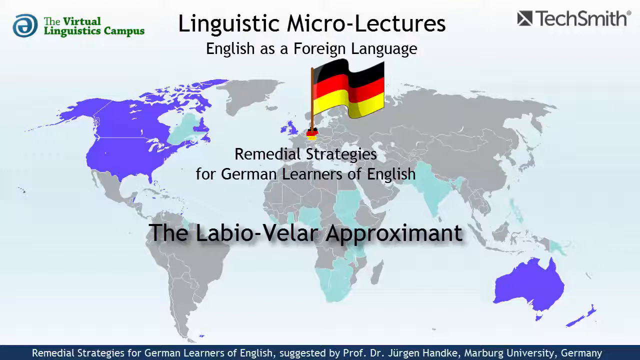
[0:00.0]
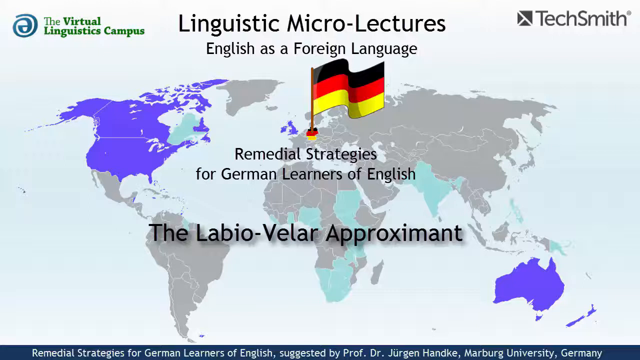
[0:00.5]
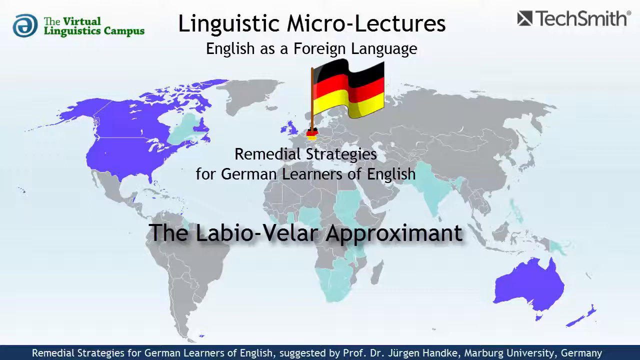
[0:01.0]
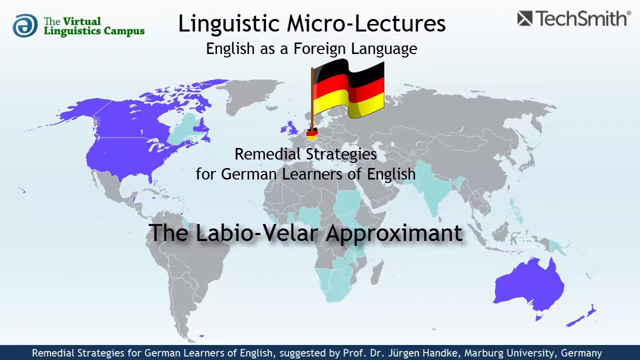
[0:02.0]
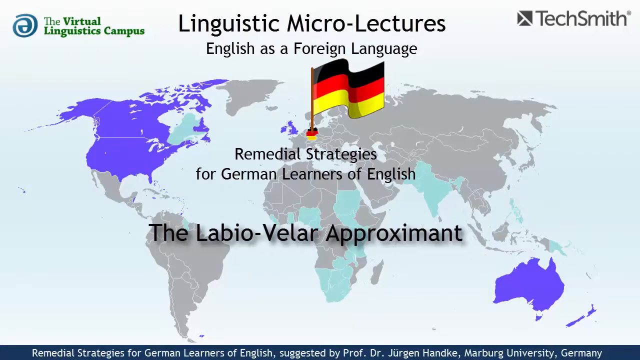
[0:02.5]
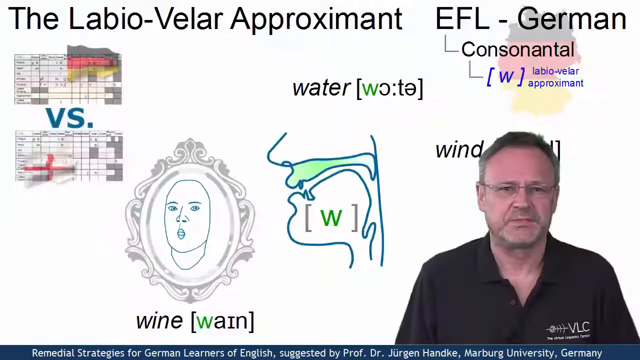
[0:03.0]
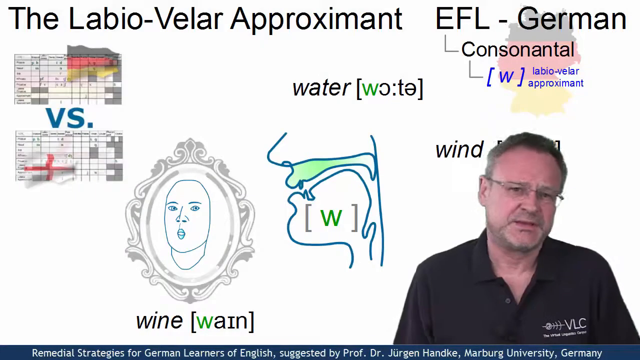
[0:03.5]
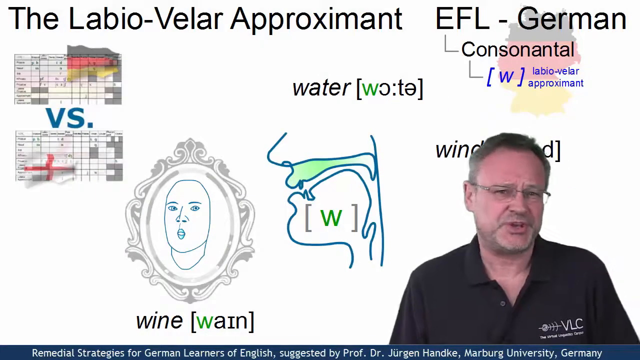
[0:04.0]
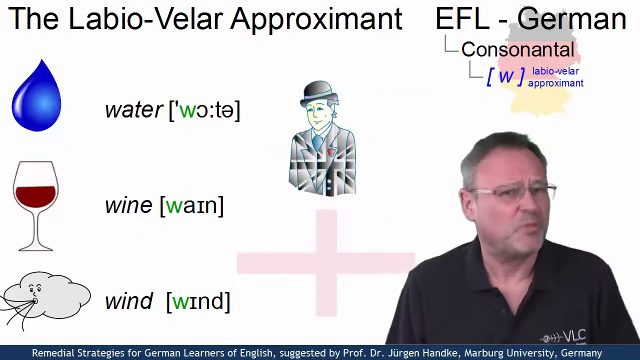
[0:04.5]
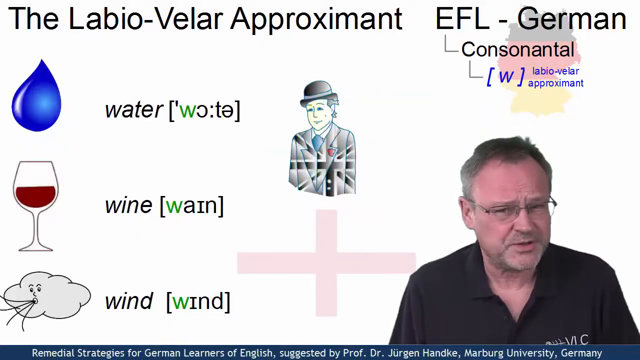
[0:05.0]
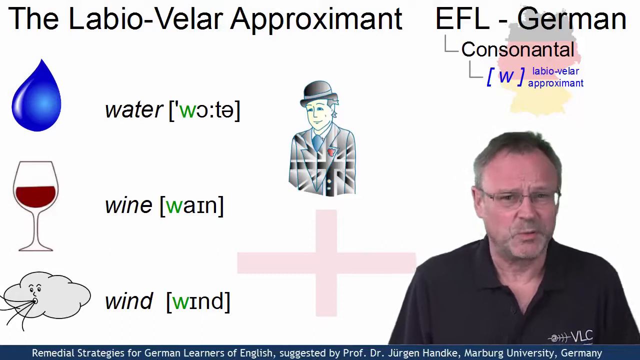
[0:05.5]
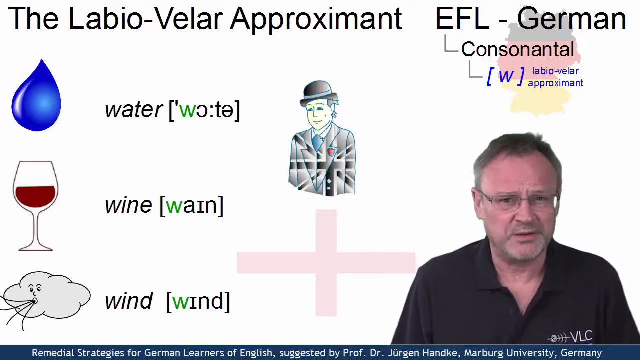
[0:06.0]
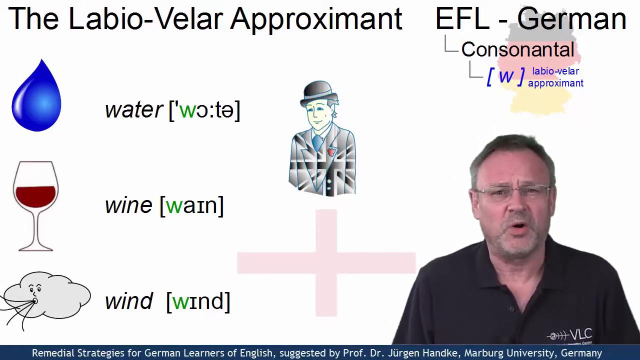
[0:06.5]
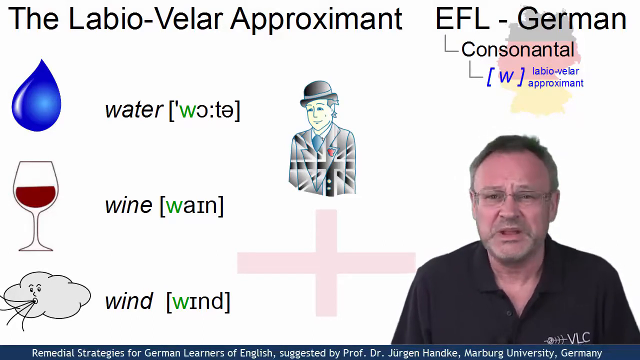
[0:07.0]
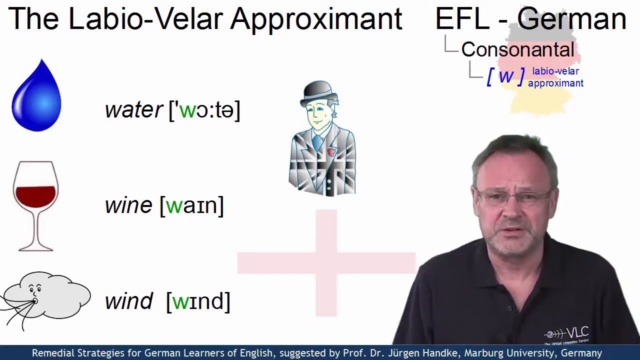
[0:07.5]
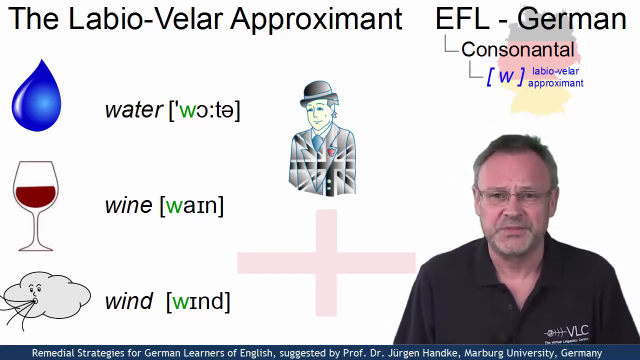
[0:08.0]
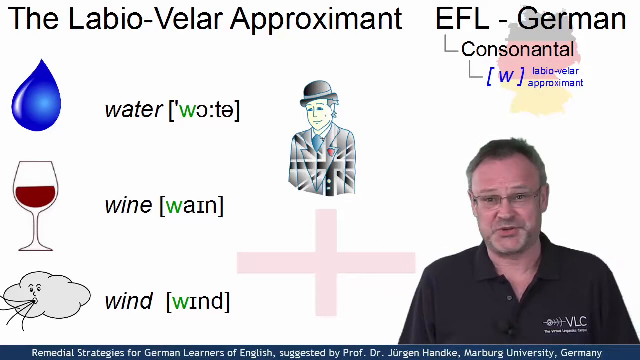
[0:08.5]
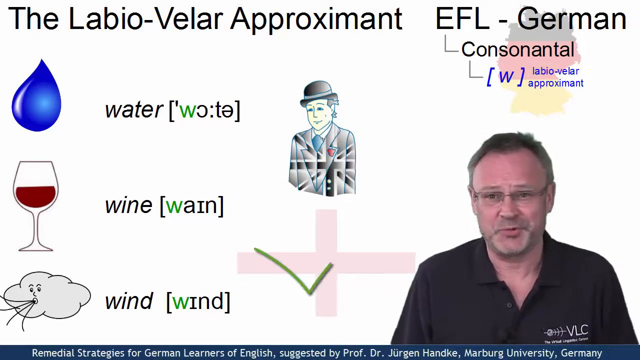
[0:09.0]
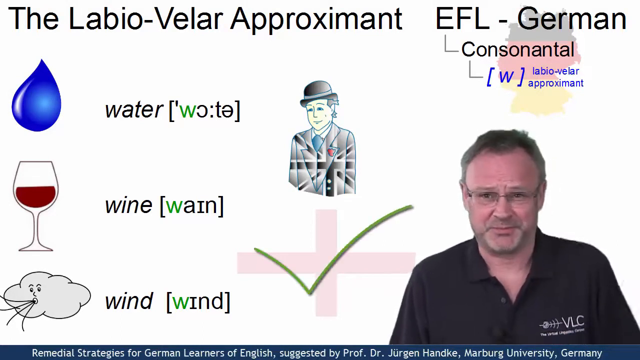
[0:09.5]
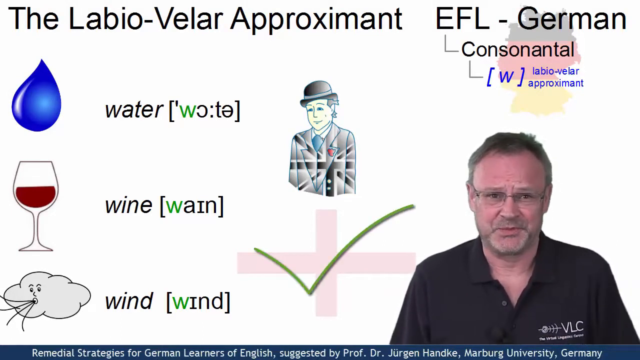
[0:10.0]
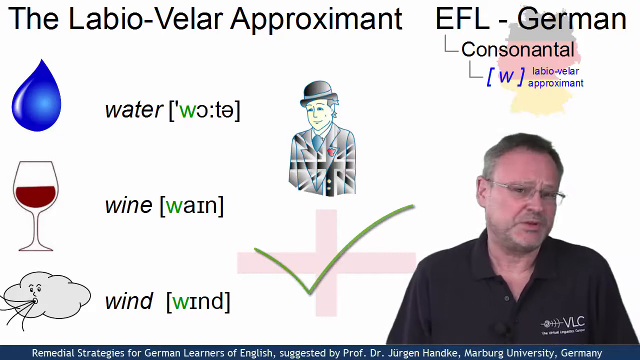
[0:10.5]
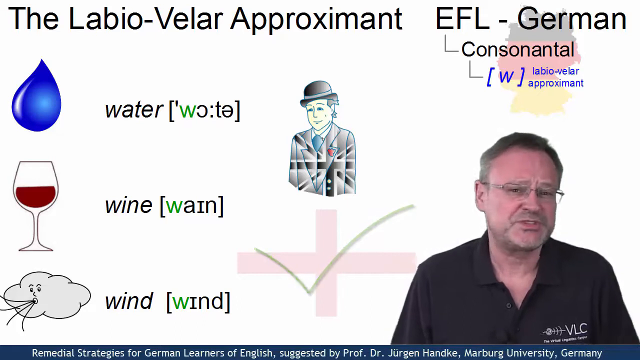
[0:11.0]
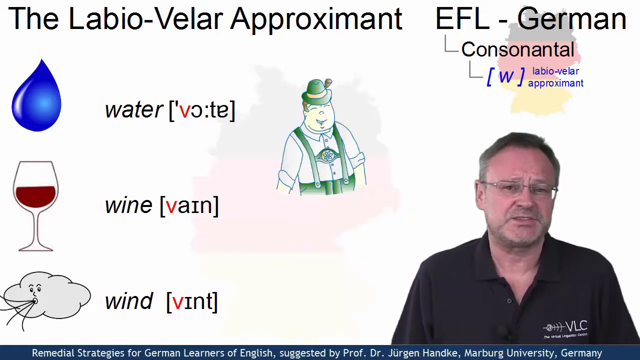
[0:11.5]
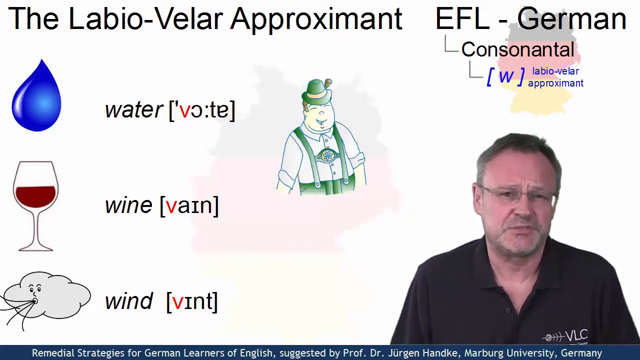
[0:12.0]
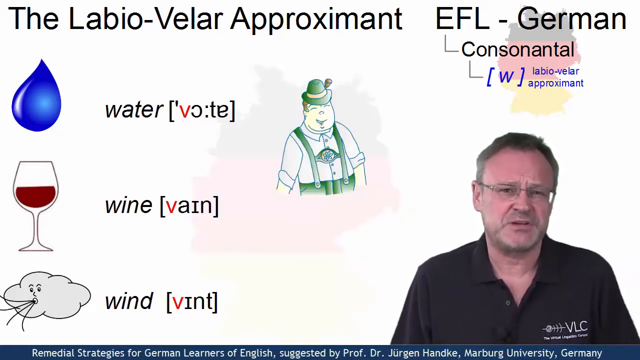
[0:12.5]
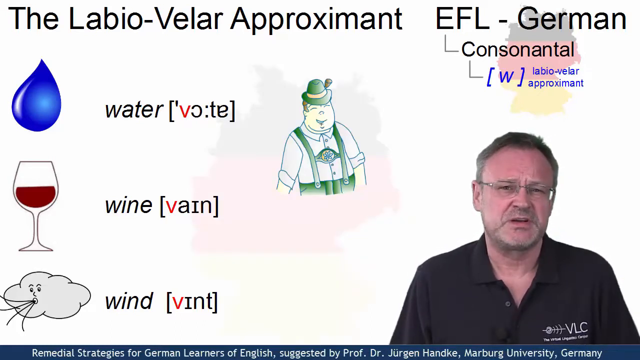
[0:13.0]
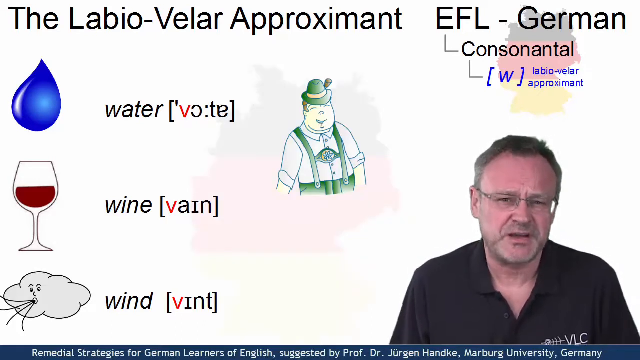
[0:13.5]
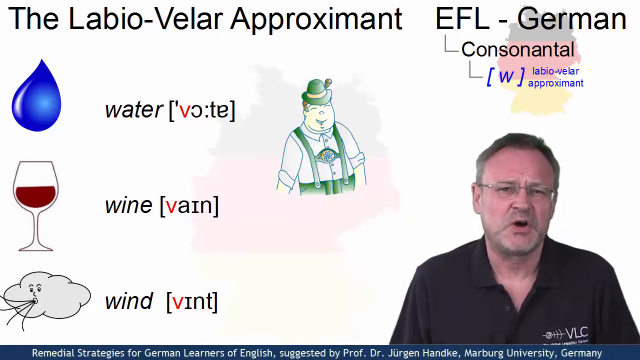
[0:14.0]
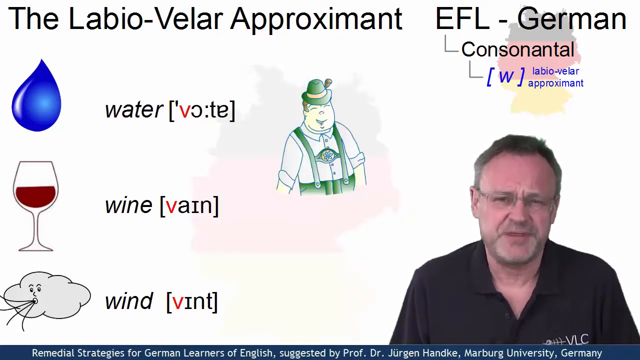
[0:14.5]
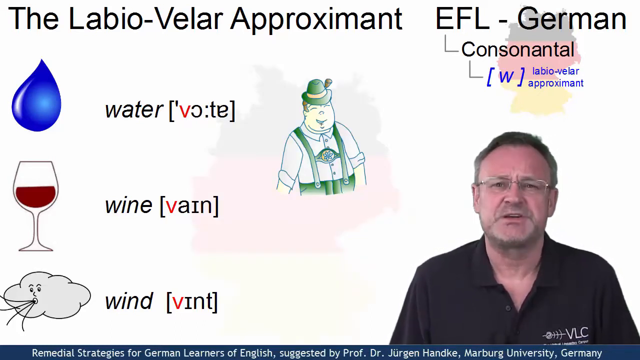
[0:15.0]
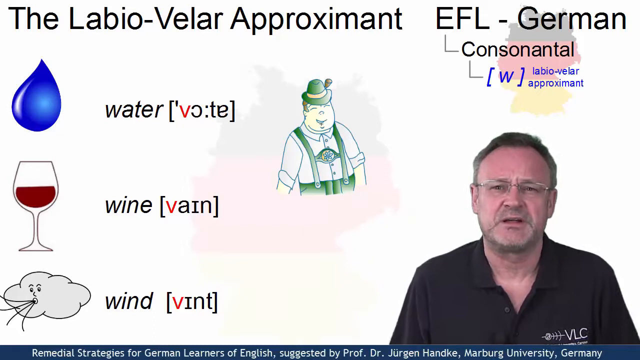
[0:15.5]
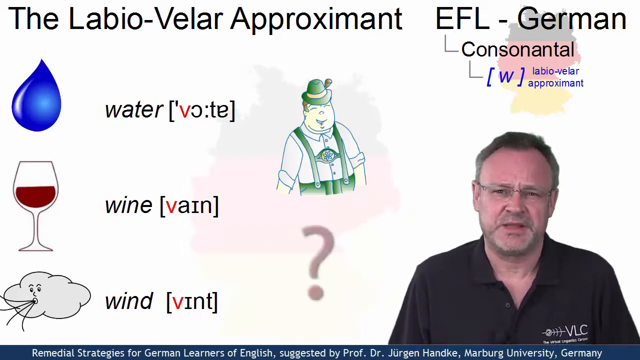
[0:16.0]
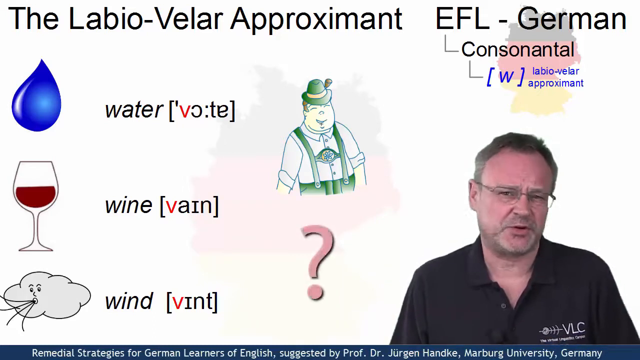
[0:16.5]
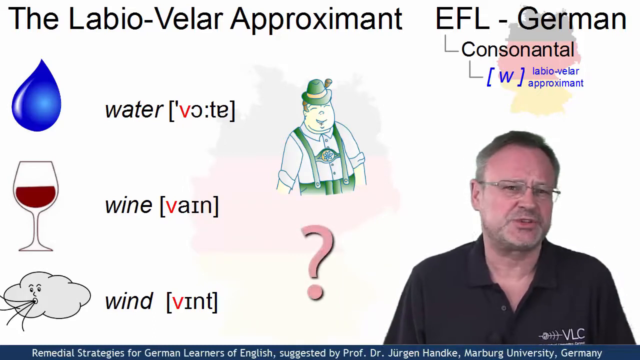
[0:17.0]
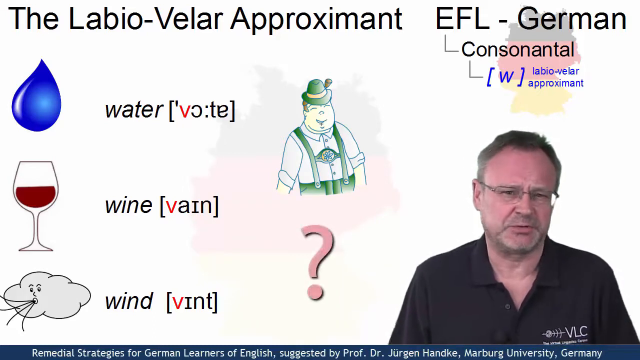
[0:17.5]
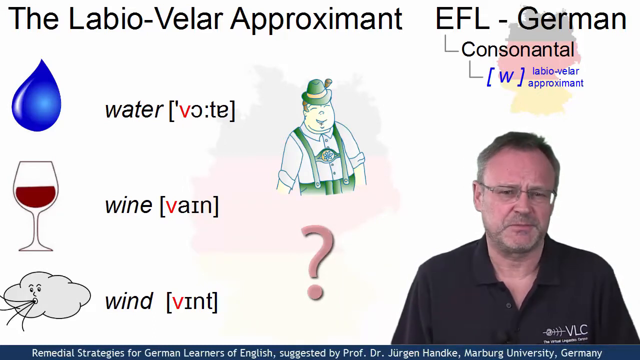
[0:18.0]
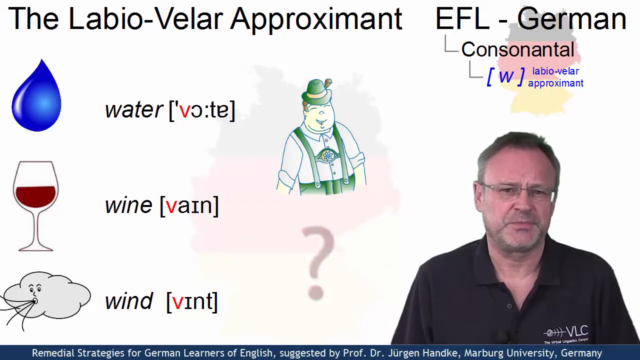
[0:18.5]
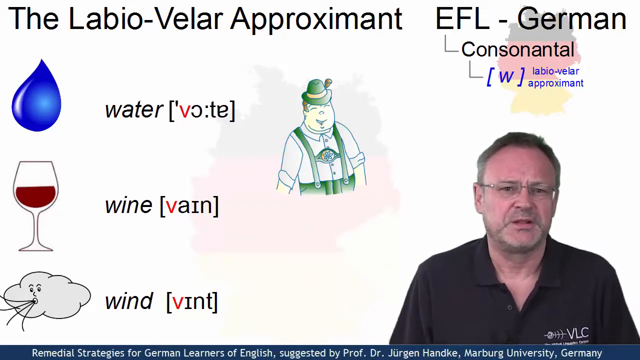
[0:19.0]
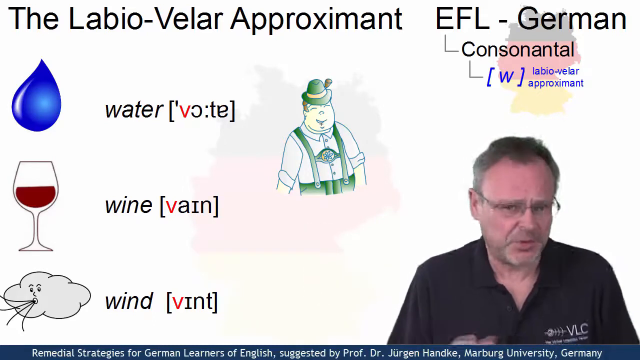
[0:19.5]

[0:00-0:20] The video seems to be an educational video related to Germany. A German flag appears, and North America is highlighted in purple. One man talks to the camera, apparently speaking in German; he seems to be in his late 40s or early 50s. He appears to be teaching beginner words such as water, wine and wind. A V is highlighted, seemingly marking the pronunciation of one of the language's consonants. The title appears to be "Remedial strategies for German learners of English." He seems to move on to the W consonant, with water, wine and wind shown and the W in square brackets to mark the letter in question. The first slide apparently shows the upper part of the lip and how the mouth should be positioned to make the W sound, with the different words all sharing the same kind of sound.